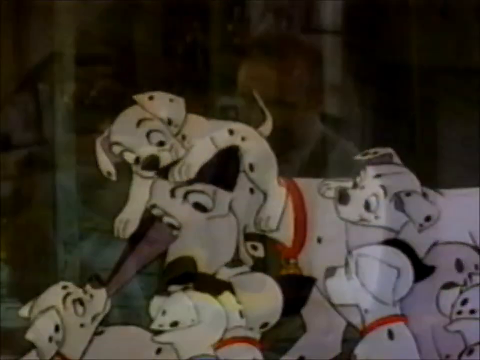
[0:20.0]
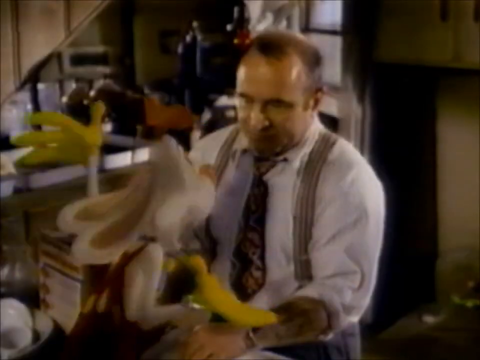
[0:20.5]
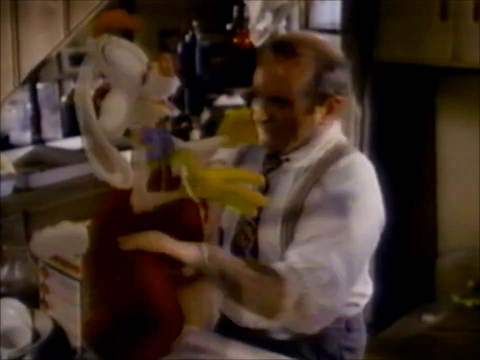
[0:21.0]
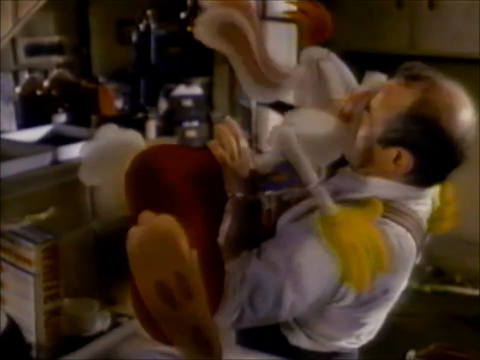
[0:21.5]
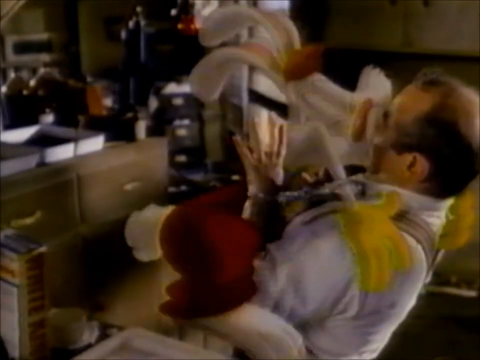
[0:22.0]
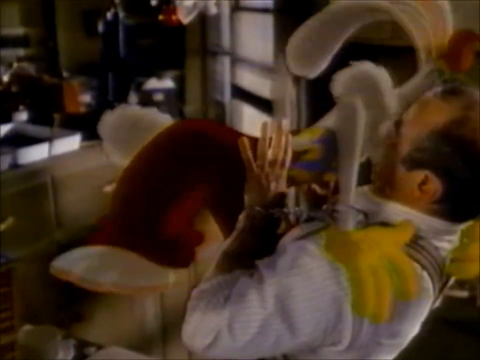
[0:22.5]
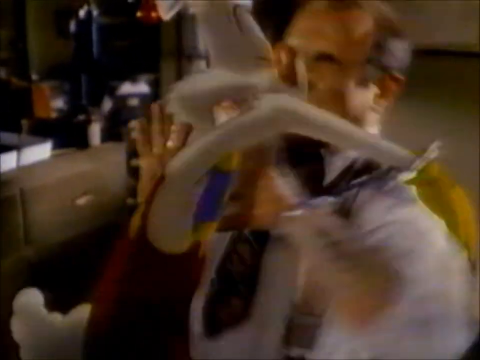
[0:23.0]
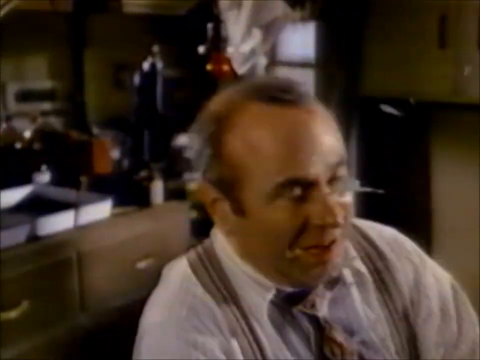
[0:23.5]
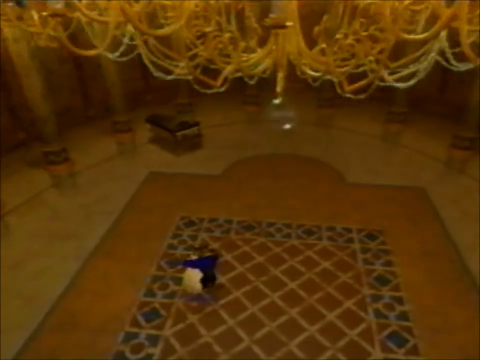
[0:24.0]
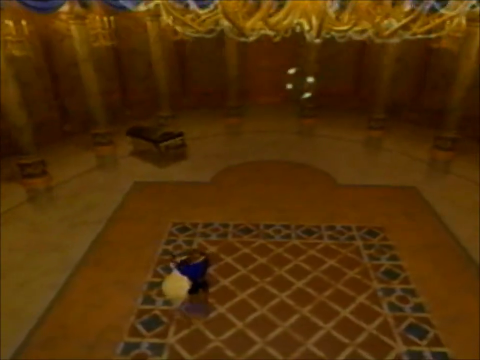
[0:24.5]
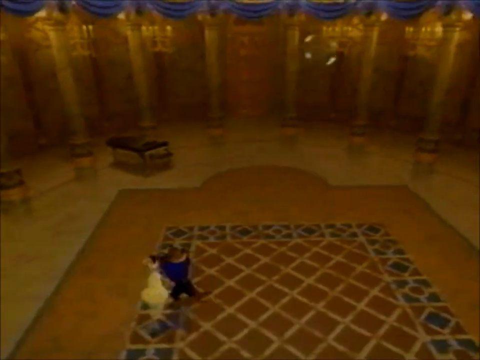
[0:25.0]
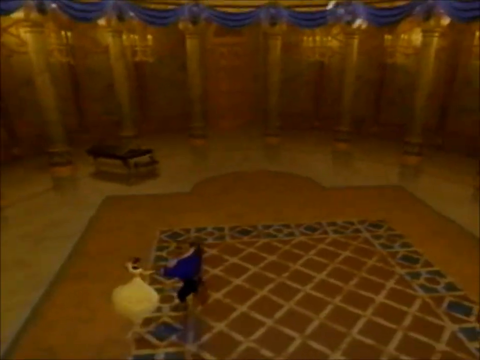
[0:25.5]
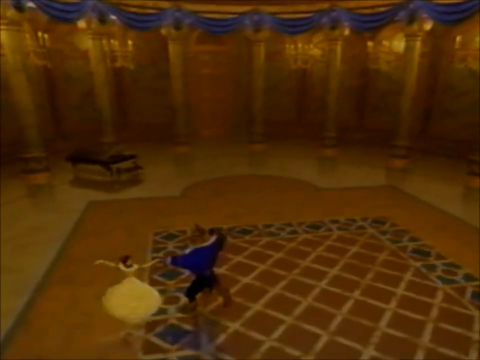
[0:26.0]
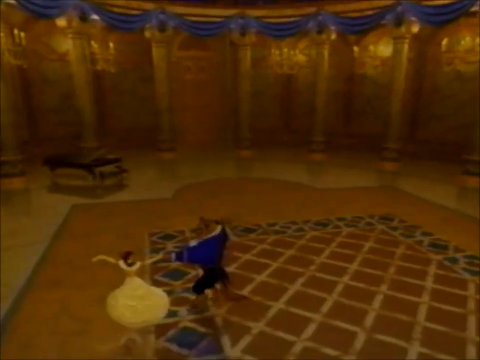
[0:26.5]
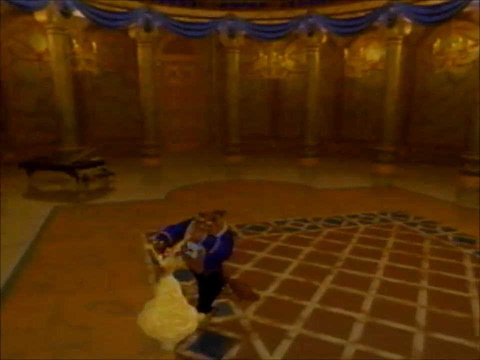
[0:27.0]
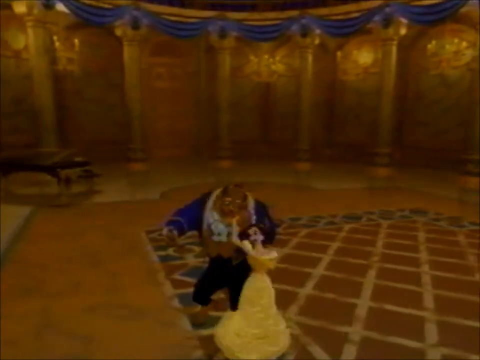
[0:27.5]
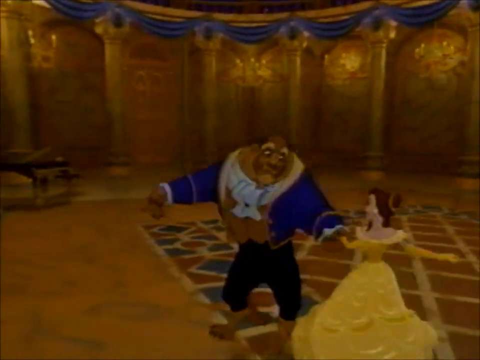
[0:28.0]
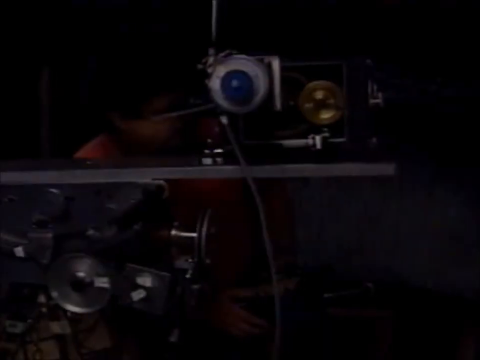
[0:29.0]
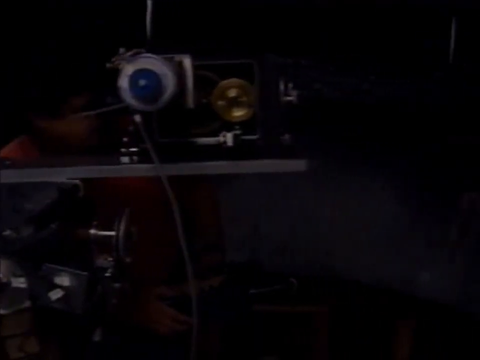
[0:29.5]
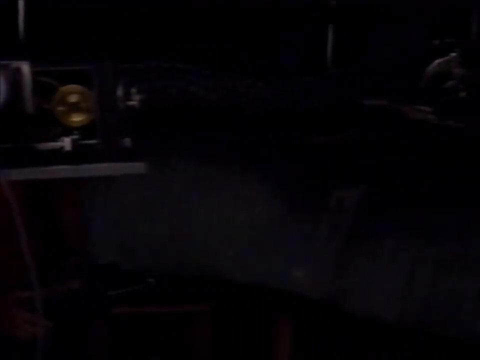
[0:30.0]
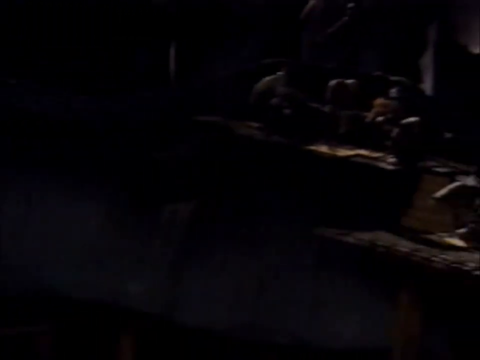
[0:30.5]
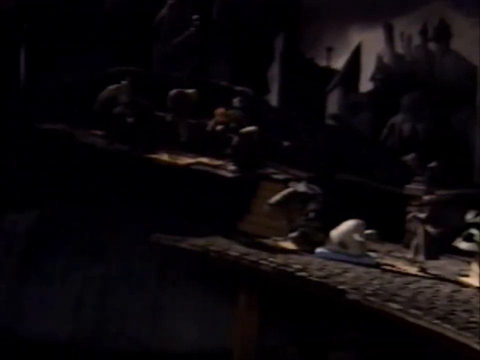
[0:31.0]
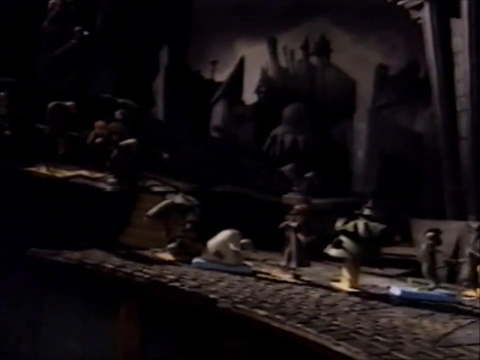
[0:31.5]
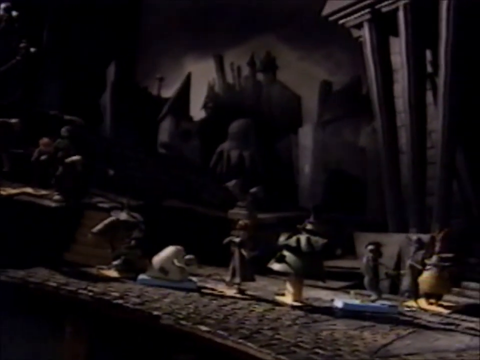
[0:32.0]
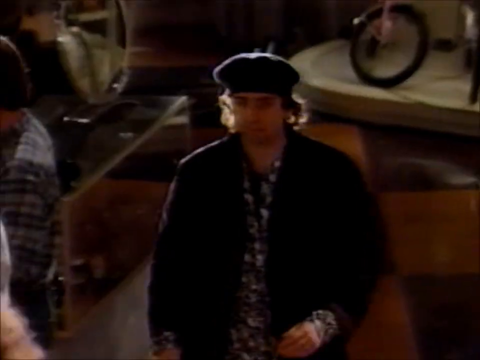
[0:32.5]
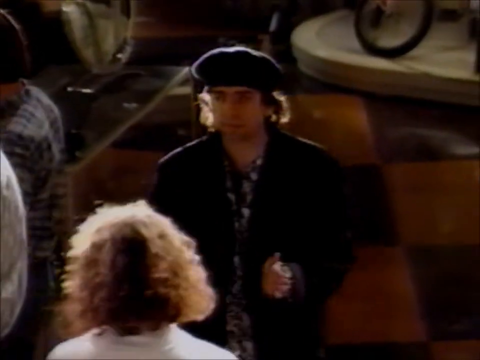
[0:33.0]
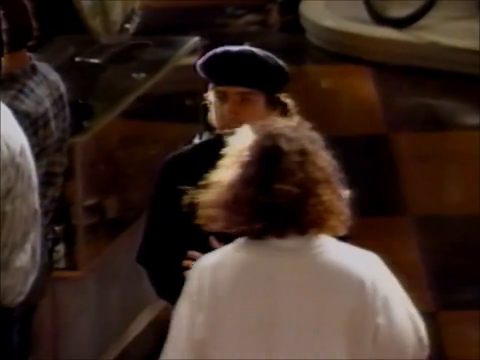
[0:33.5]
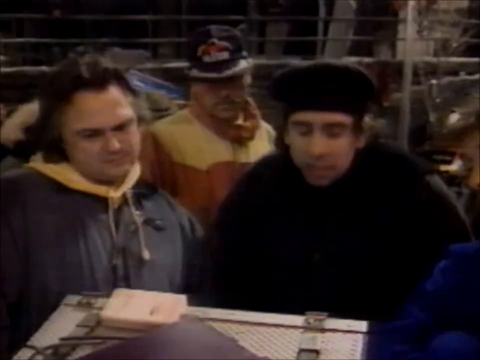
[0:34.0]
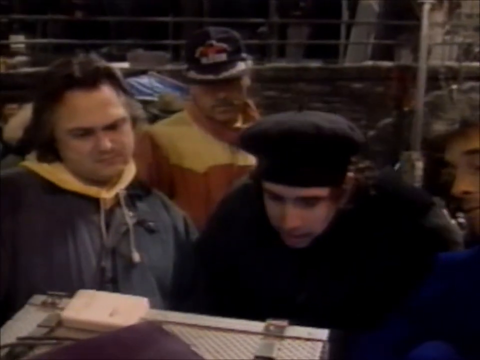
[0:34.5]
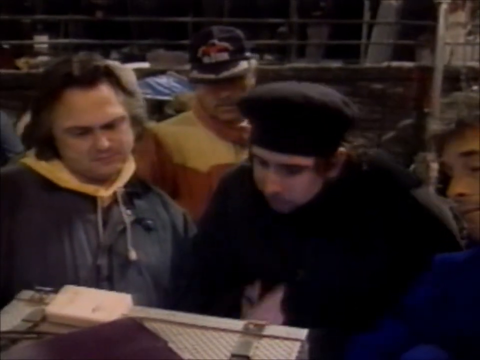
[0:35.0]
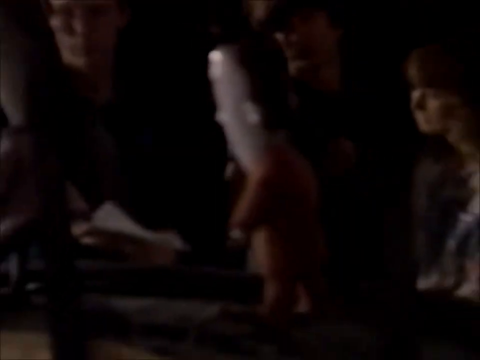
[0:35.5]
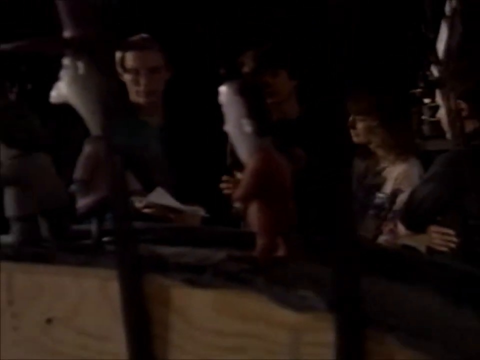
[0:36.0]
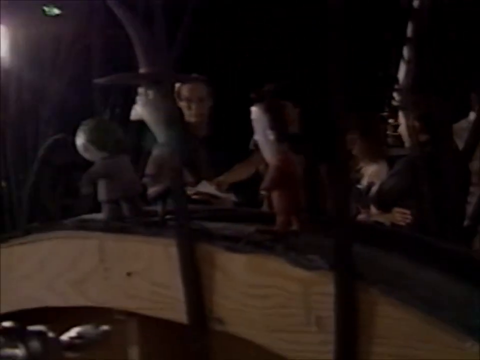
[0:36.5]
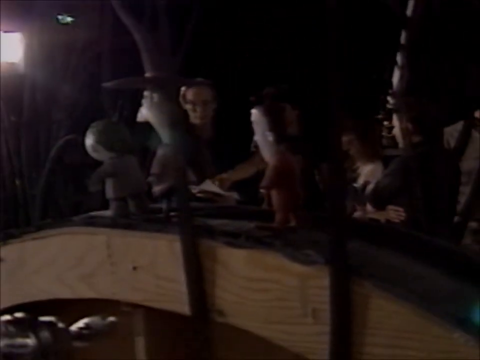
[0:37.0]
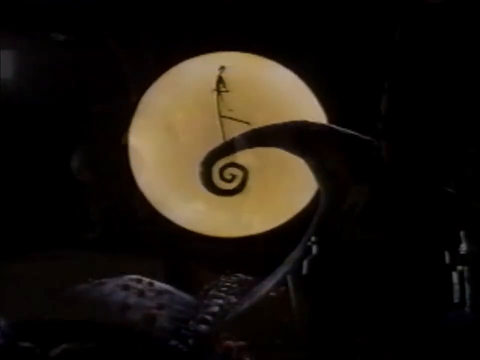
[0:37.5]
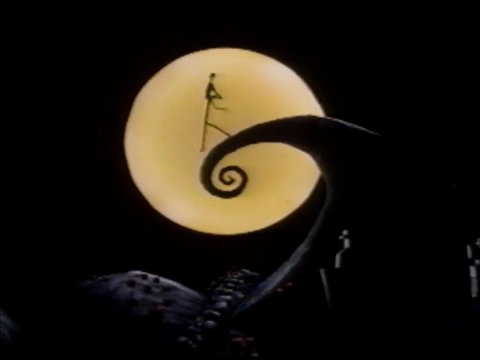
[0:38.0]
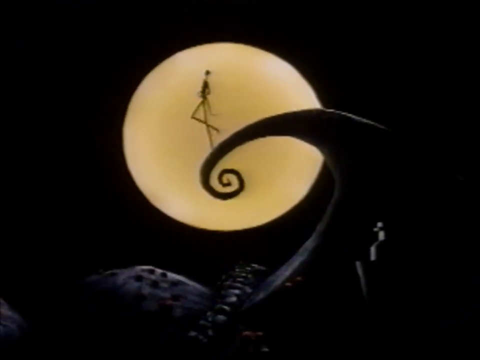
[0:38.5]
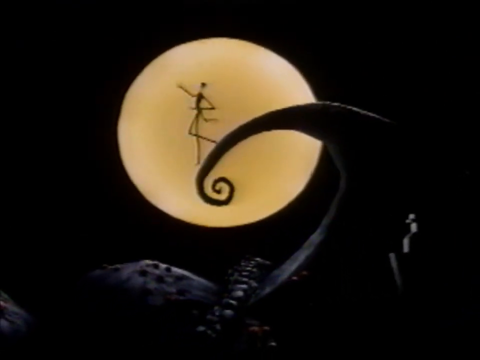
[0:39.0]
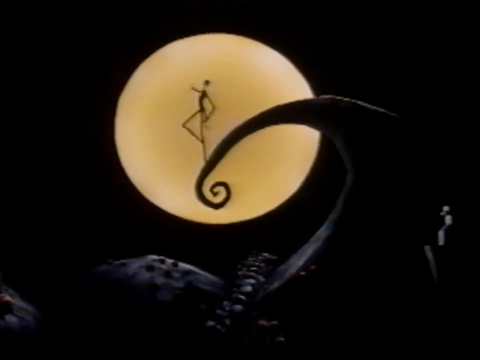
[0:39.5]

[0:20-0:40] An adult Dalmatian wearing a red collar is smiling, surrounded by several Dalmatian pups climbing on top of it and playing with it. The video quickly transitions to footage from Who Framed Roger Rabbit, where a middle-aged man wearing a business suit is kissed by a cartoon rabbit; he pulls the rabbit off of him. The scene transitions to a golden ballroom with a central rug, where Belle dances with the Beast from Beauty and the Beast. The scene quickly fades to black and is replaced by a studio with gadgets on a shelf as well as on the floor. It switches to a man in a black suit and black hat talking to several others, shown from various camera perspectives. The scene then shifts to footage from The Nightmare Before Christmas, where Jack Skellington is walking on the tip of a mountain.